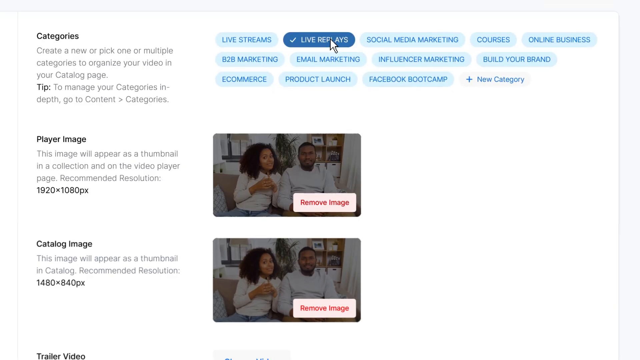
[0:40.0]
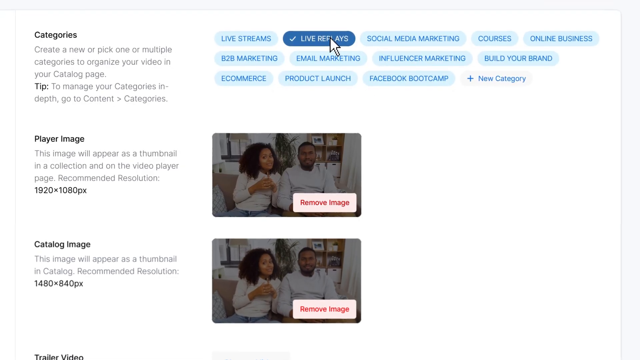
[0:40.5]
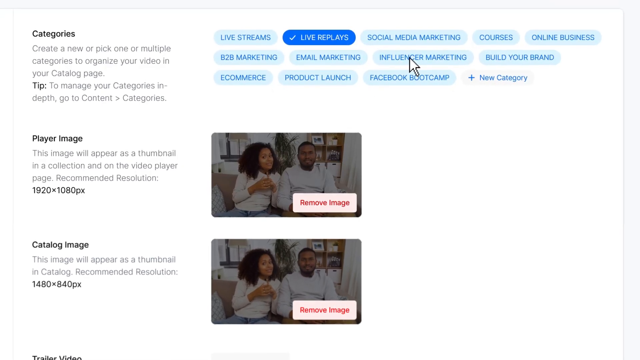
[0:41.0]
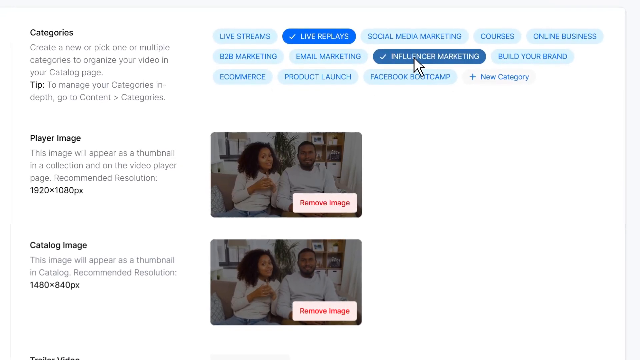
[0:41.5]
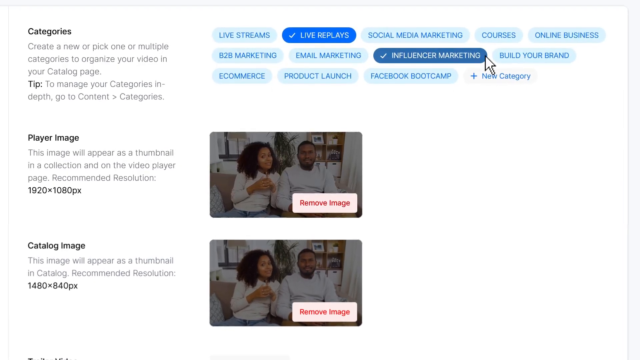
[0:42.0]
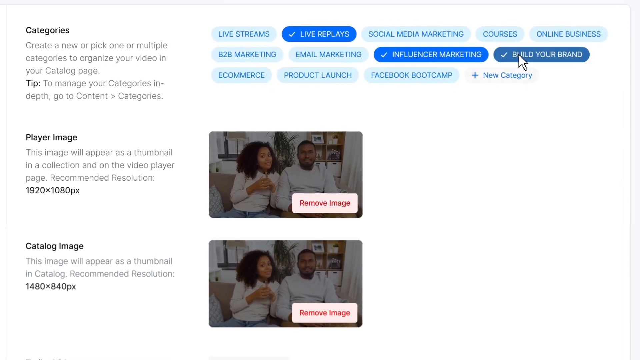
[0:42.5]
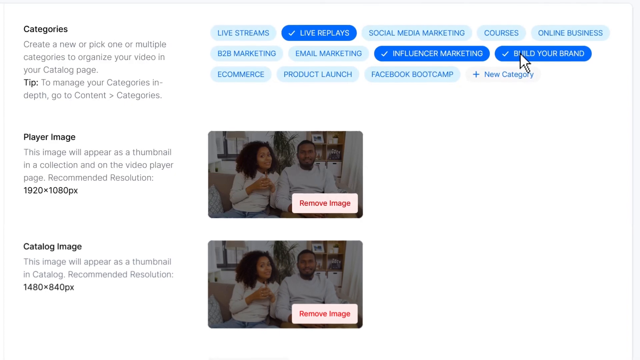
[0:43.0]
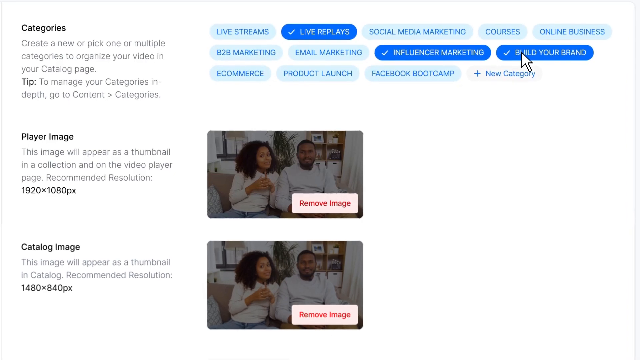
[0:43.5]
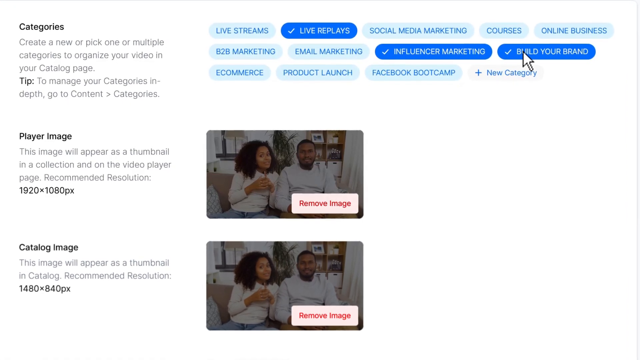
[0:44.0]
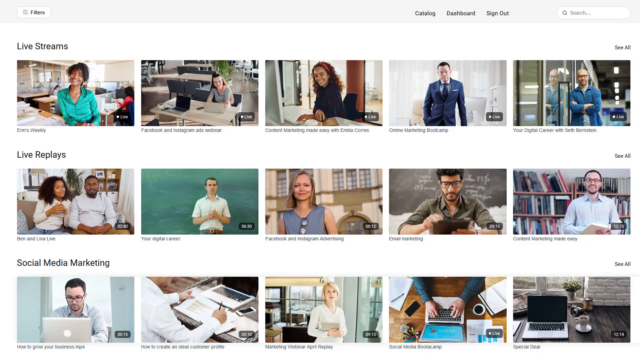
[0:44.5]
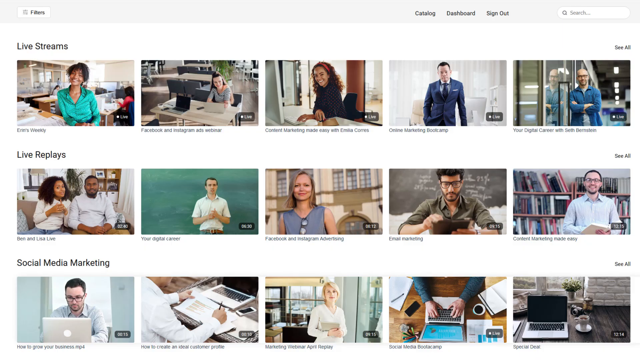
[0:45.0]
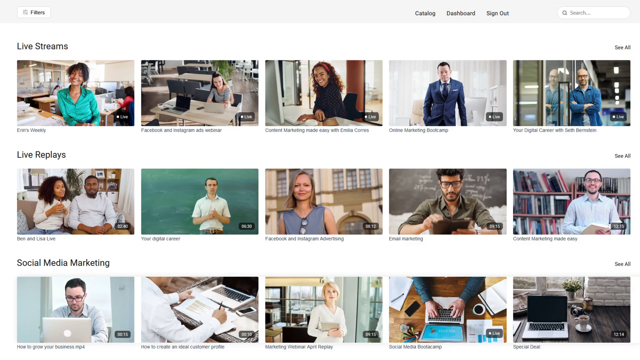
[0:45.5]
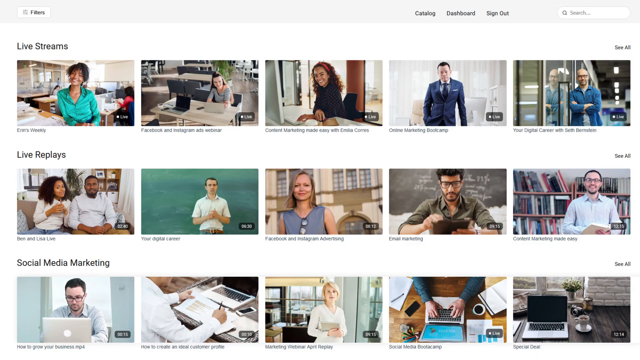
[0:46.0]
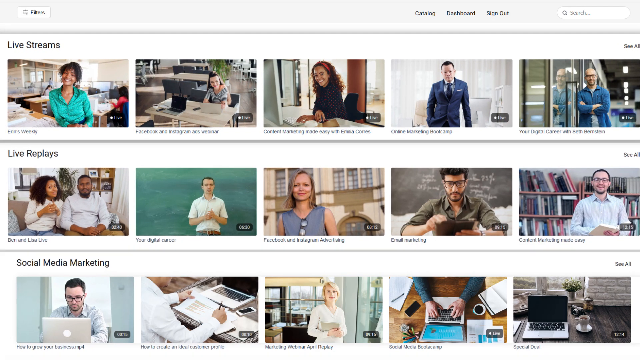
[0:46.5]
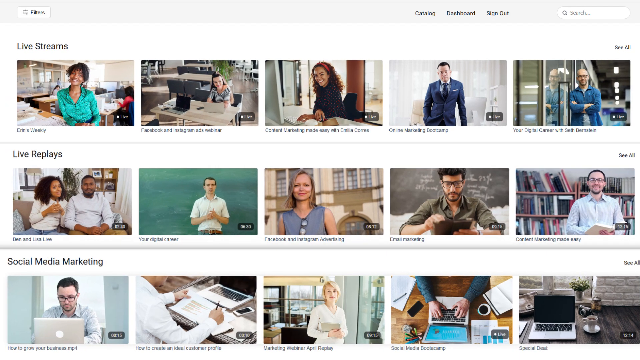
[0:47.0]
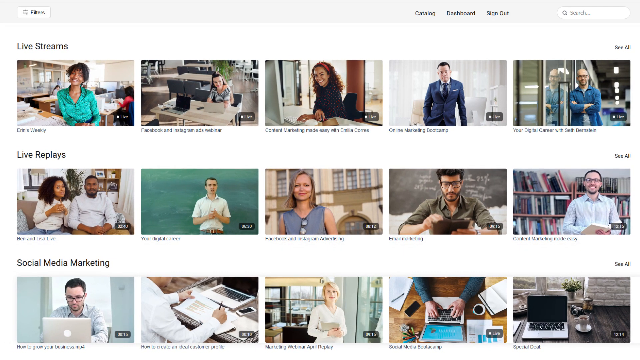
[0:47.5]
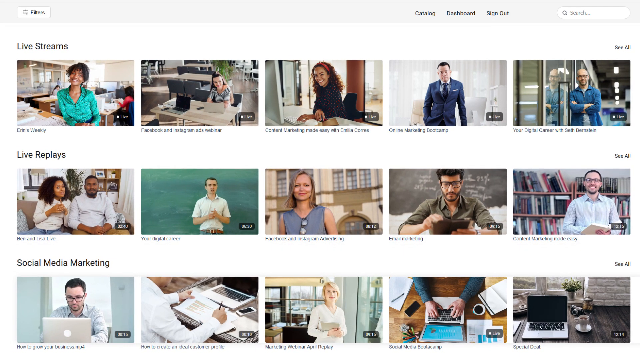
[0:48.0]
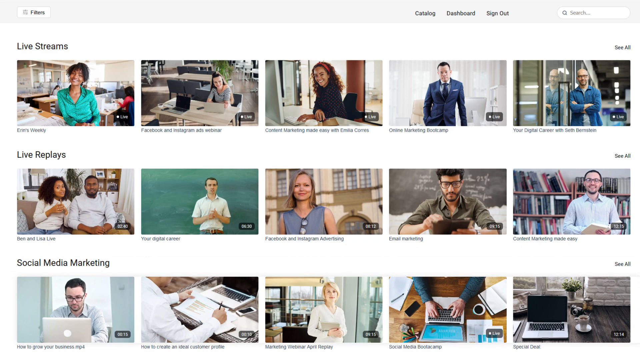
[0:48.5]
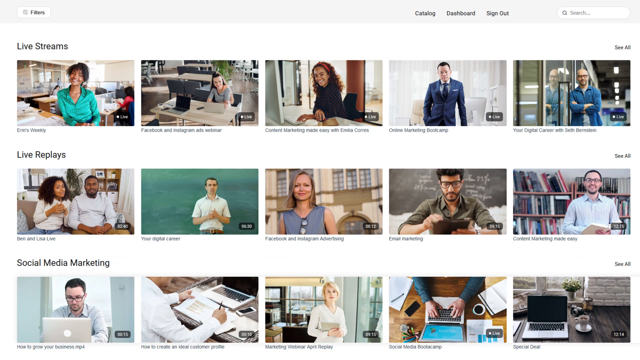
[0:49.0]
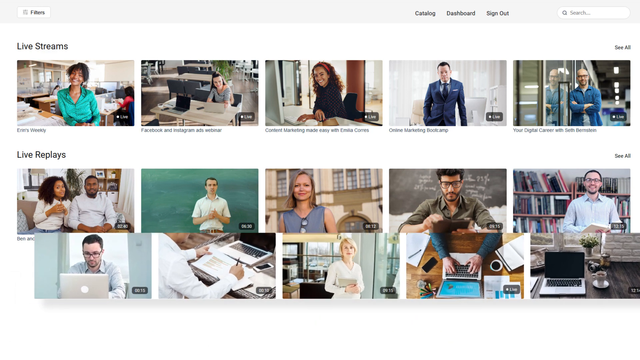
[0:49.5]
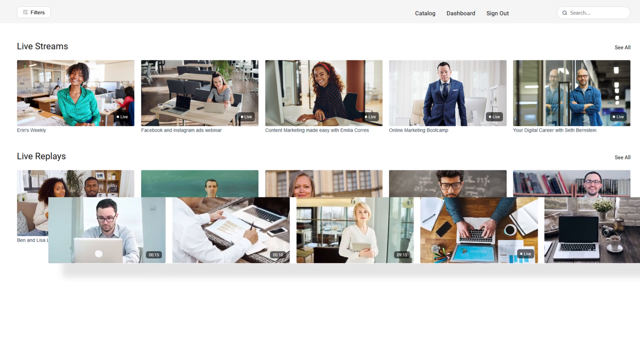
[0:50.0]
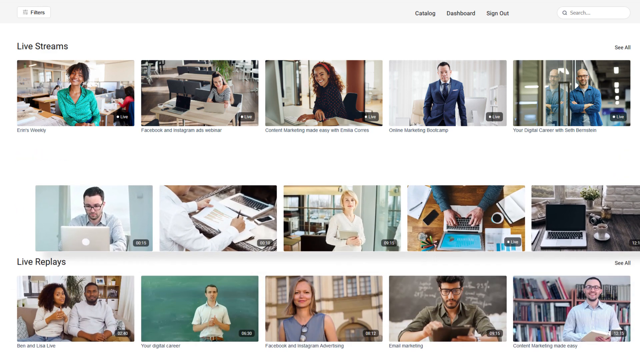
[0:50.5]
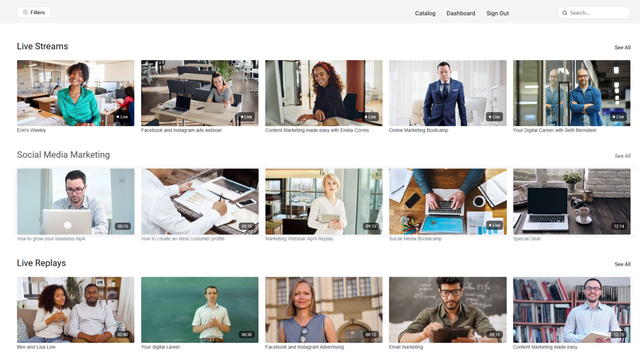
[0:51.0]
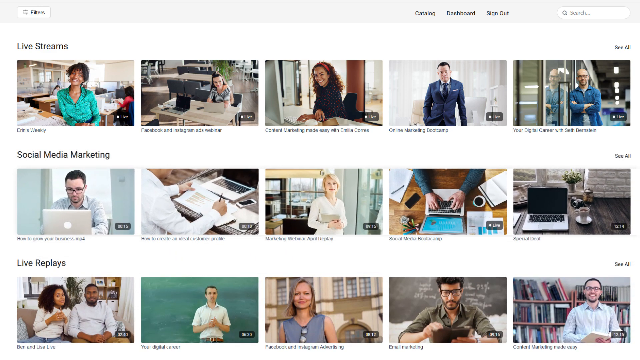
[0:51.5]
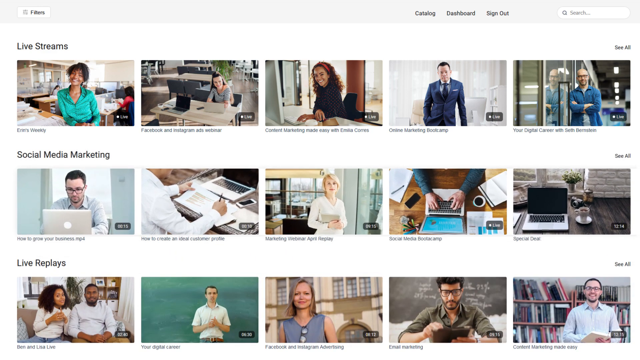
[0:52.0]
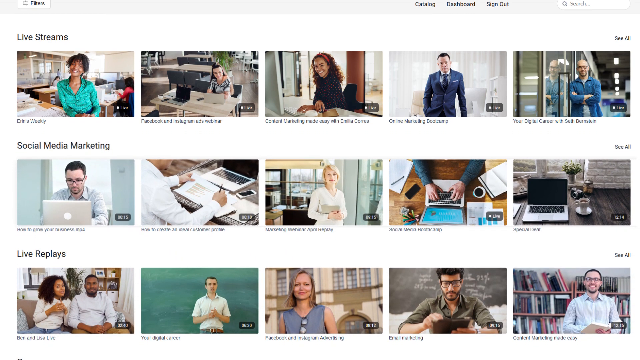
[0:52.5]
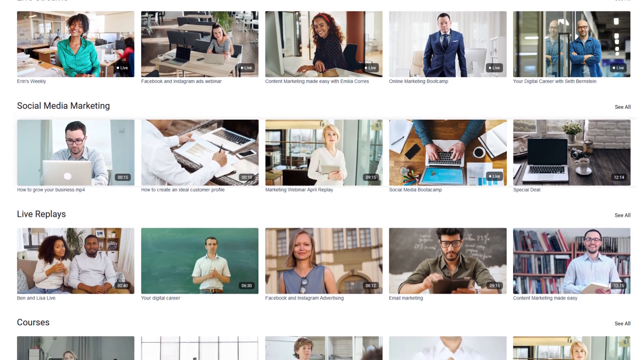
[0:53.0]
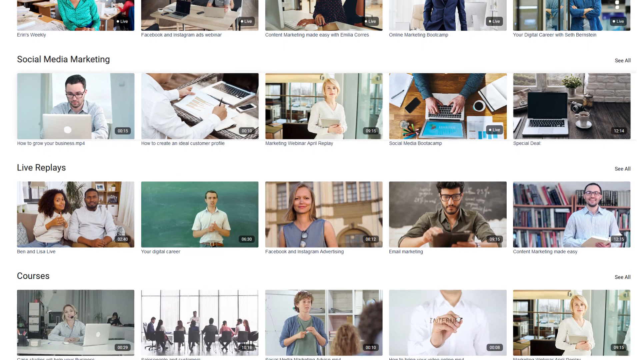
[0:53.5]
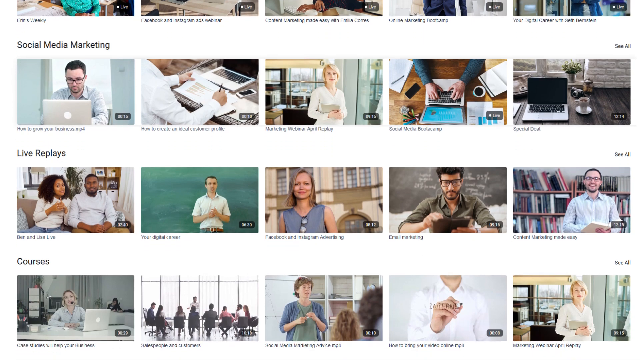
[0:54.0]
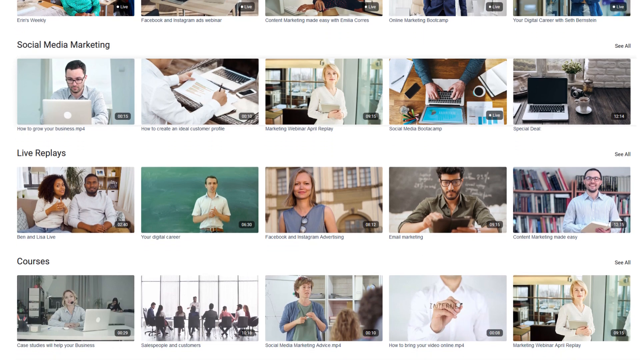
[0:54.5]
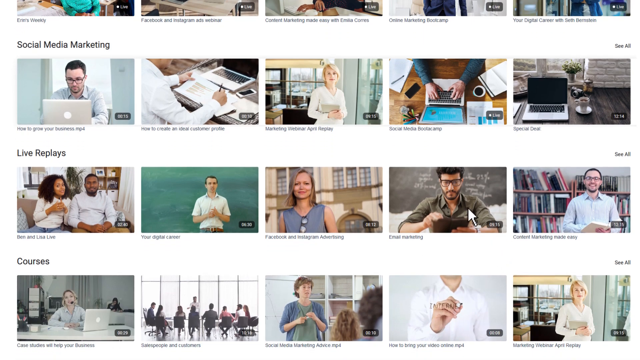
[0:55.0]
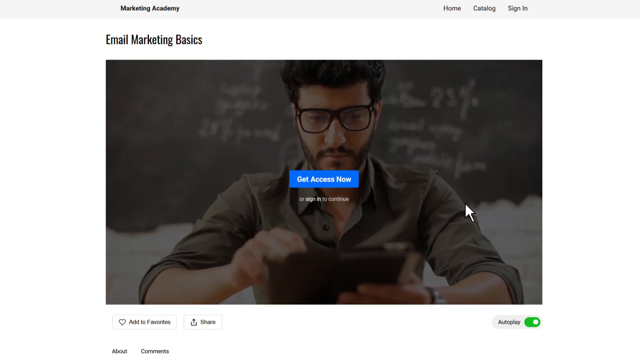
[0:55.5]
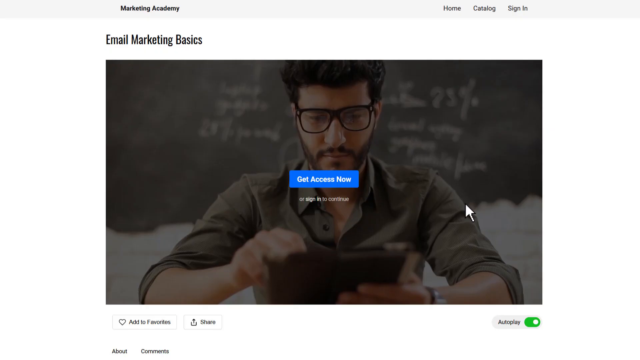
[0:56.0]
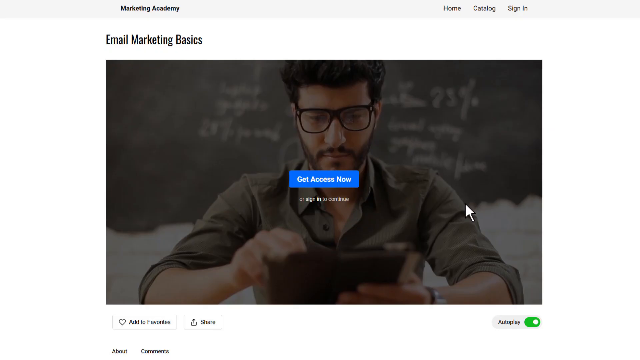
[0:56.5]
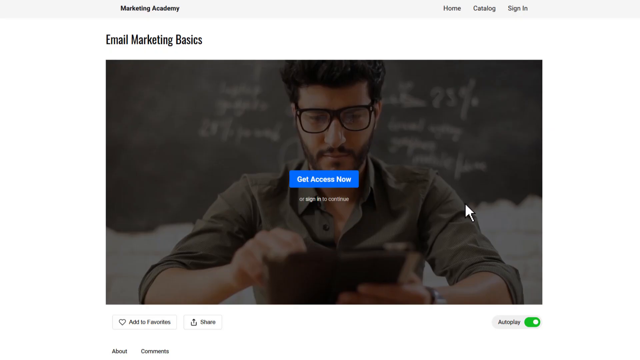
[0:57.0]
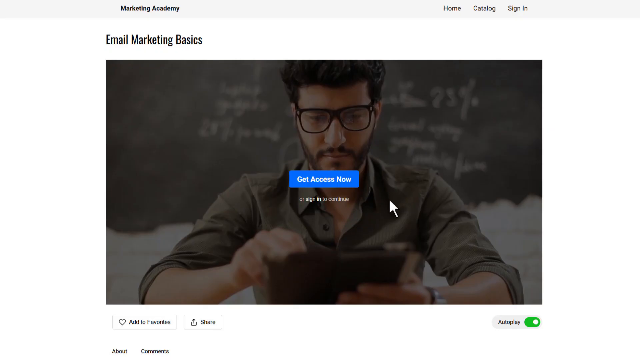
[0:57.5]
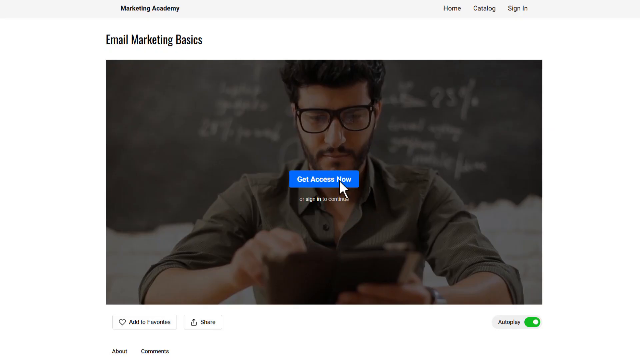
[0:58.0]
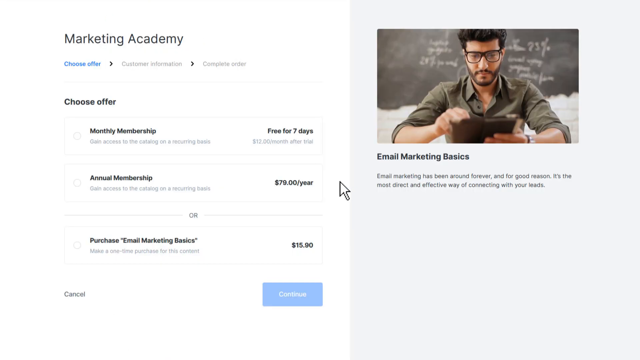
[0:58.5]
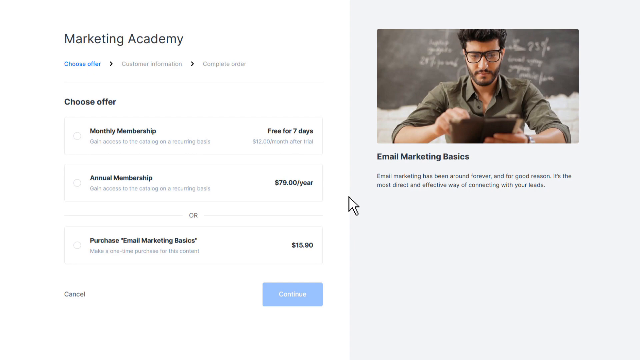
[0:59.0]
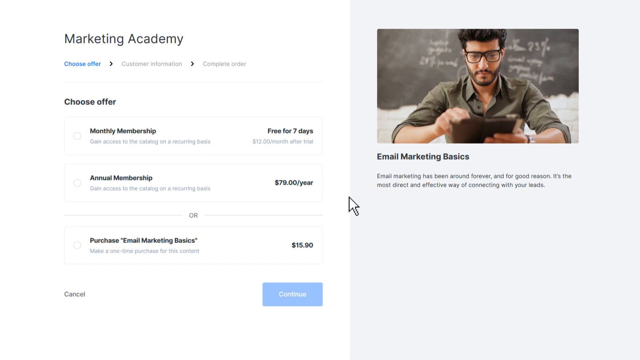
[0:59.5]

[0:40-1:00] The website offers many clickable categories of information. A live cursor moves all over the screen as someone clicks on options such as live replays, live stream and social media marketing. Different people are pictured in different boxes. The social media marketing item changes from one position to another, and there is an option to get access now. After live replays is clicked, images can be removed, and podcasts come up that can be deleted. The site offers many functions, including work, business and meetings, adding to favorites, and viewing salaries of people for job searching. There is a vast assortment of videos.